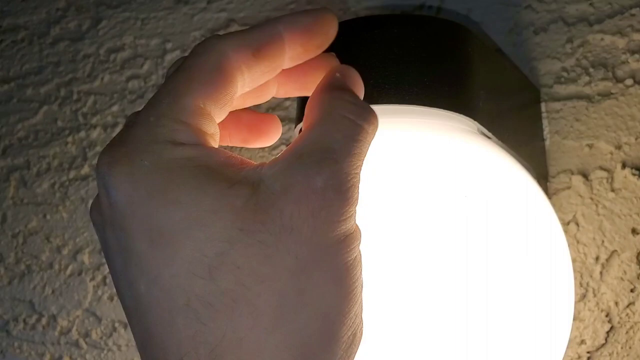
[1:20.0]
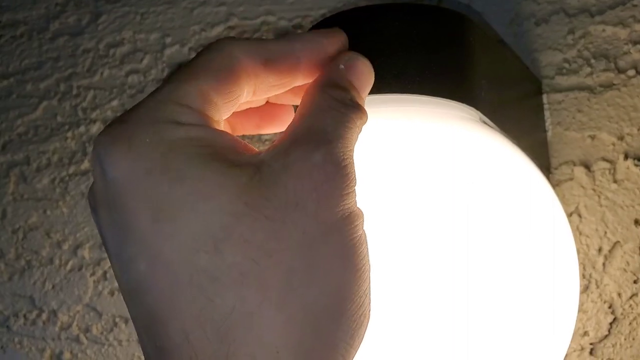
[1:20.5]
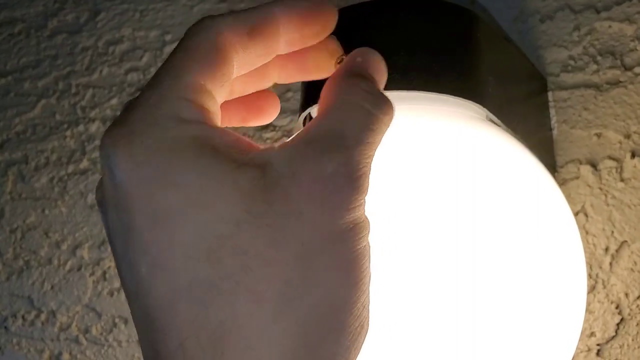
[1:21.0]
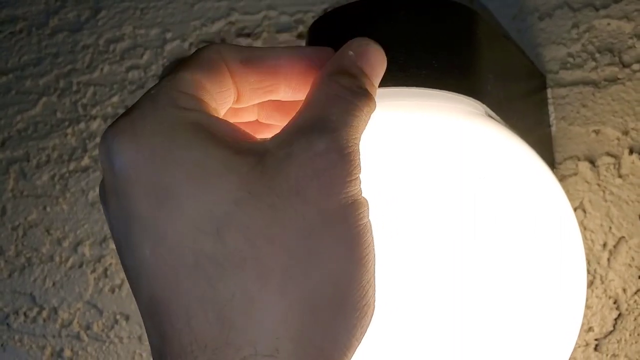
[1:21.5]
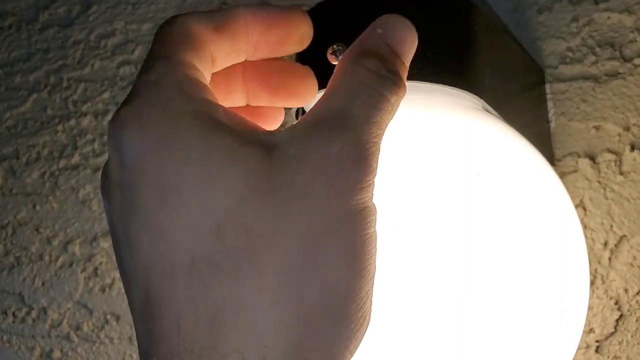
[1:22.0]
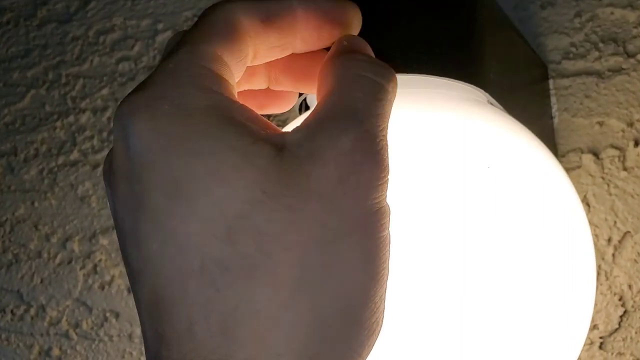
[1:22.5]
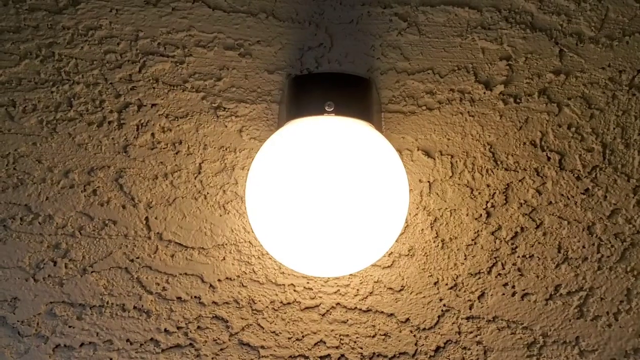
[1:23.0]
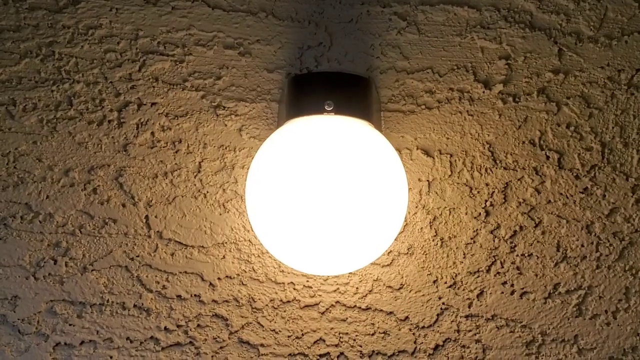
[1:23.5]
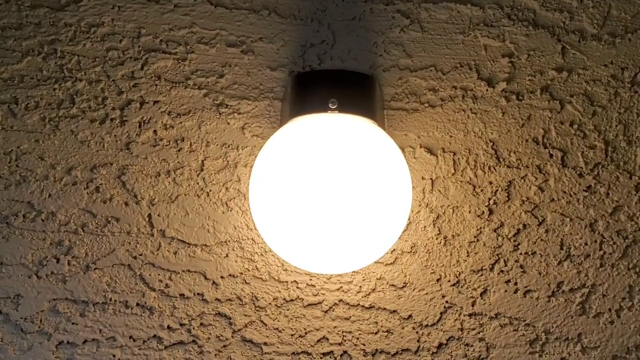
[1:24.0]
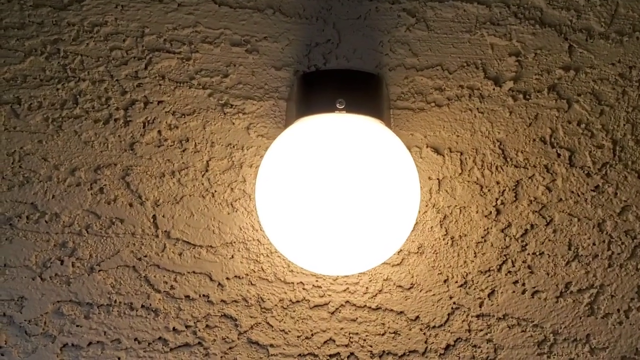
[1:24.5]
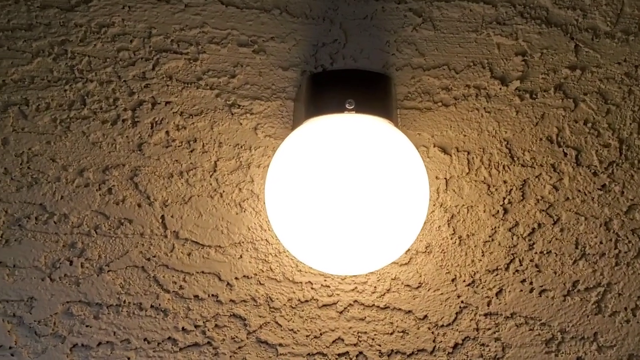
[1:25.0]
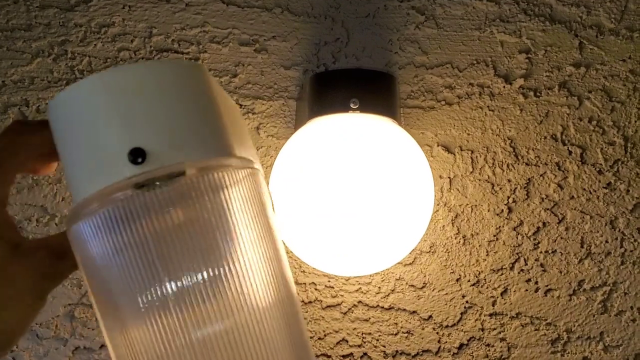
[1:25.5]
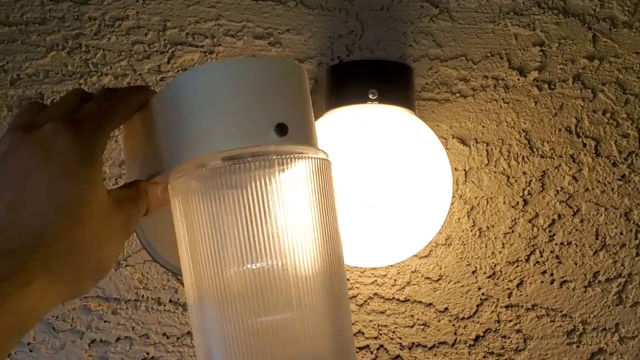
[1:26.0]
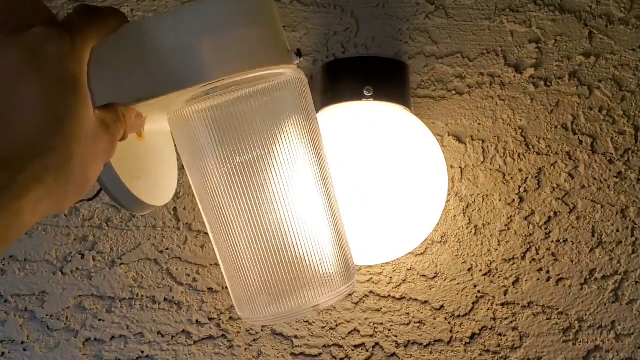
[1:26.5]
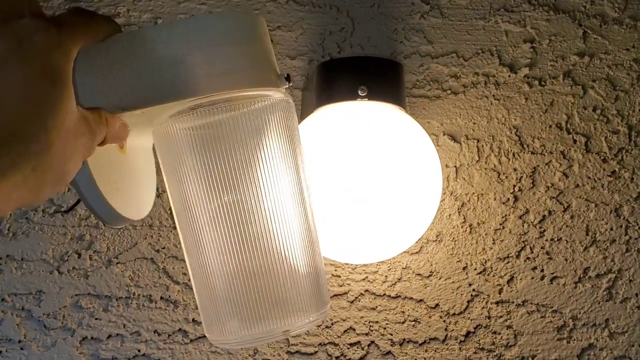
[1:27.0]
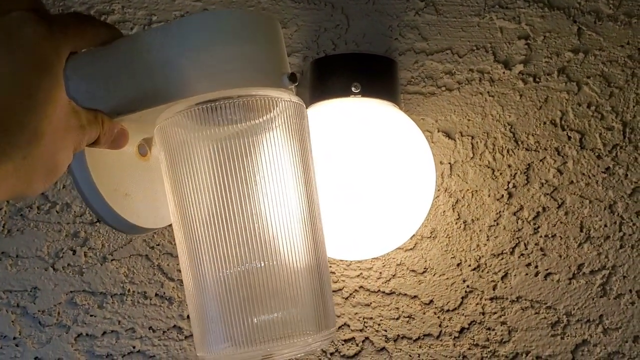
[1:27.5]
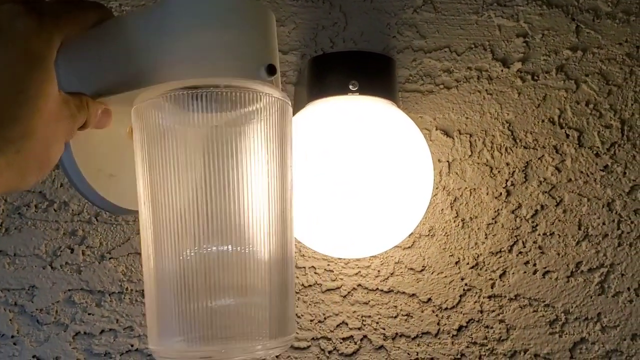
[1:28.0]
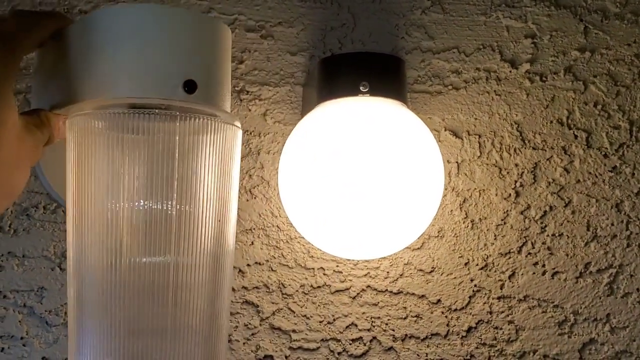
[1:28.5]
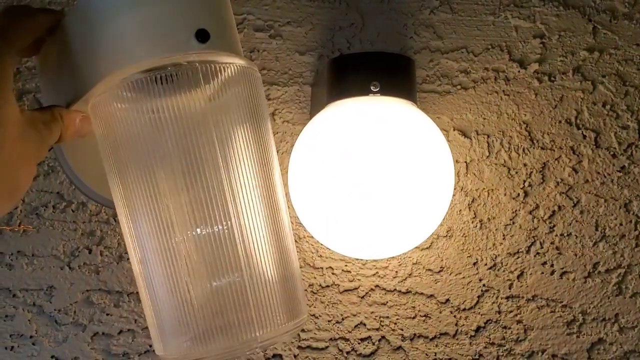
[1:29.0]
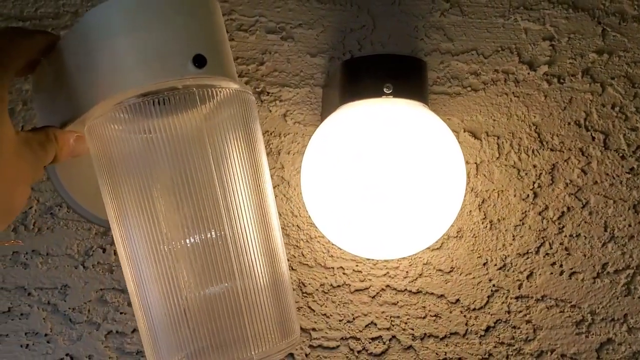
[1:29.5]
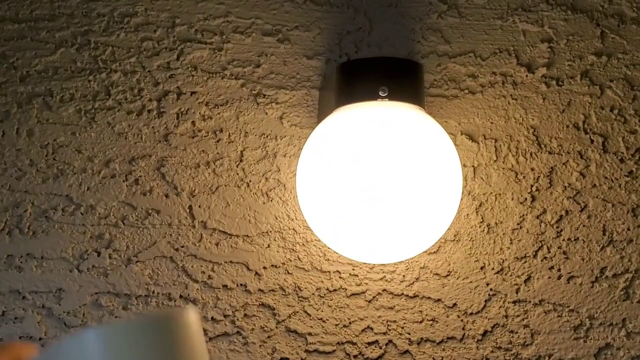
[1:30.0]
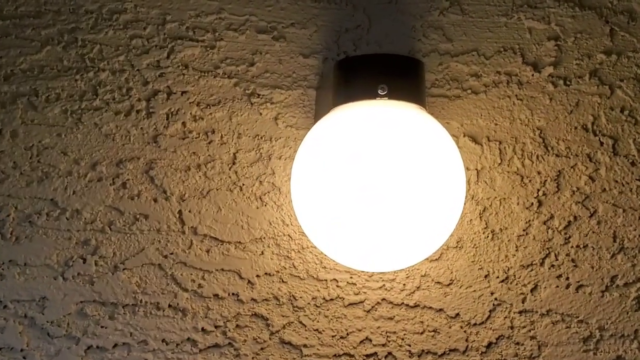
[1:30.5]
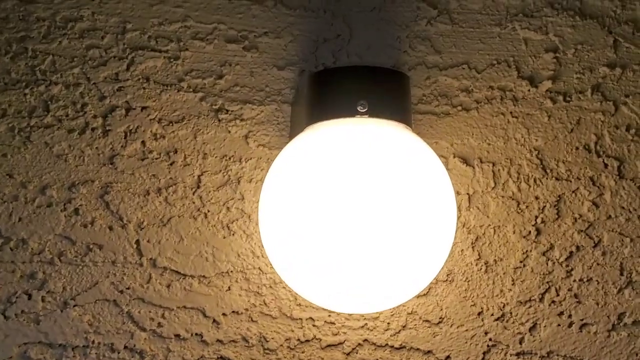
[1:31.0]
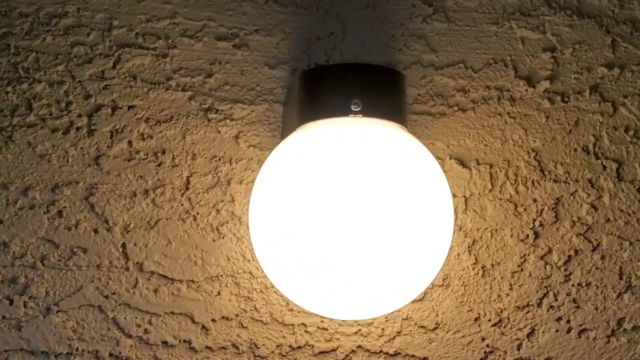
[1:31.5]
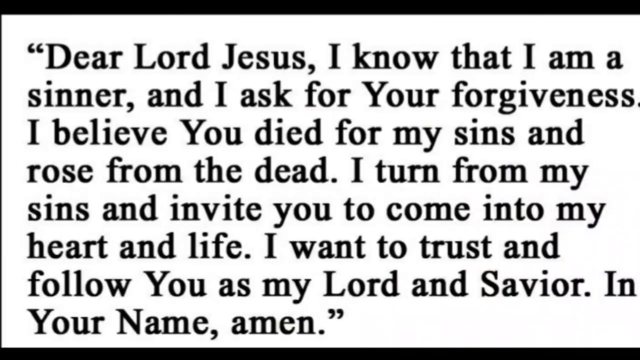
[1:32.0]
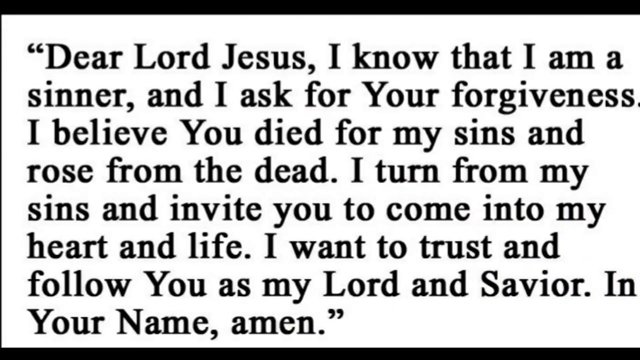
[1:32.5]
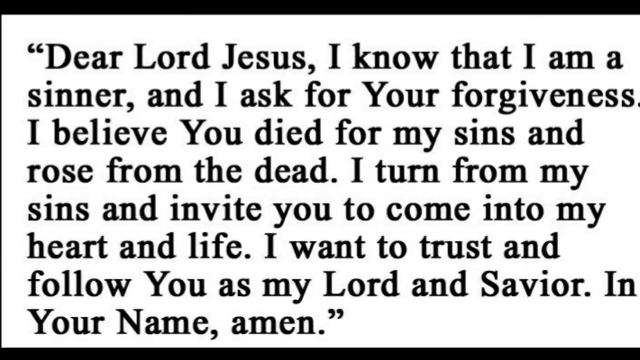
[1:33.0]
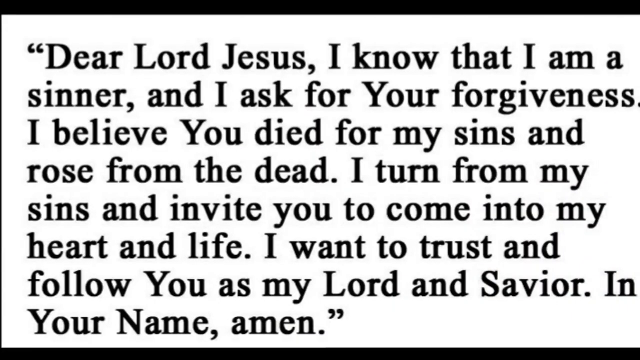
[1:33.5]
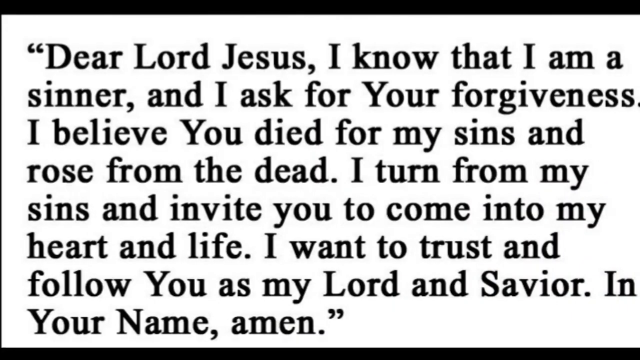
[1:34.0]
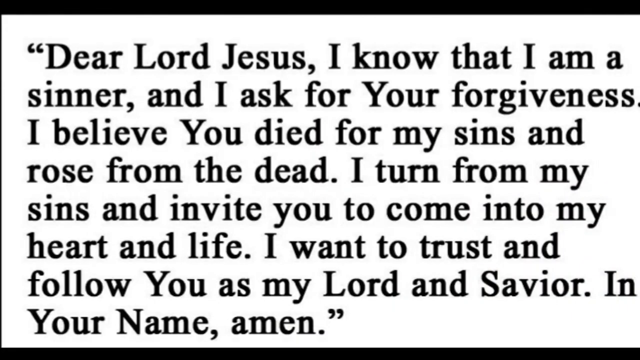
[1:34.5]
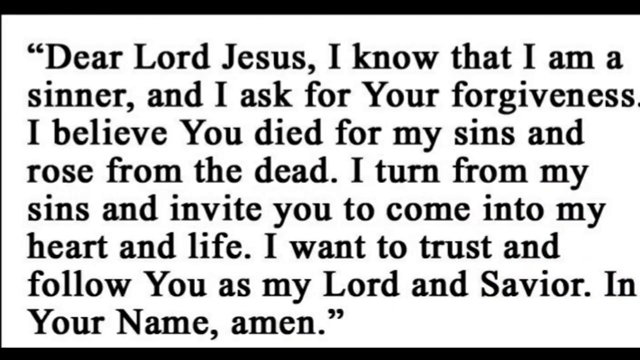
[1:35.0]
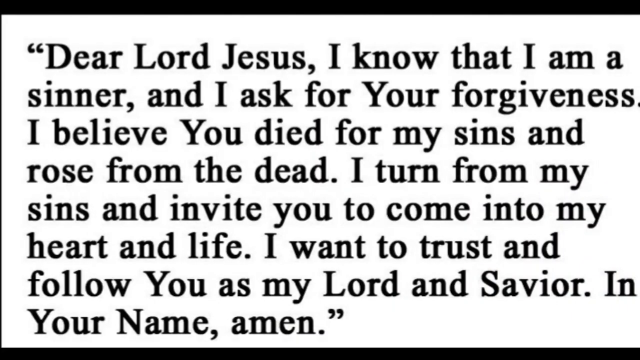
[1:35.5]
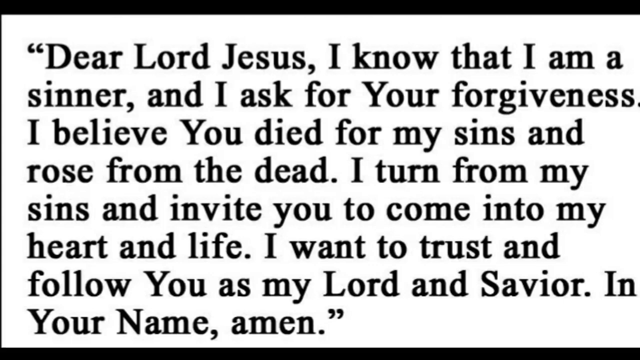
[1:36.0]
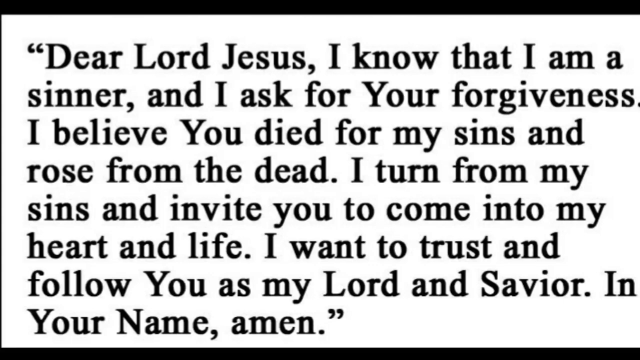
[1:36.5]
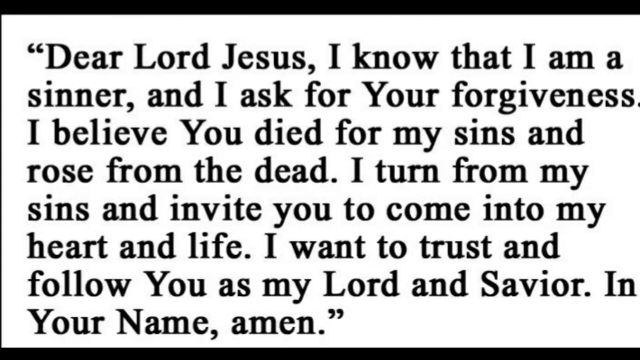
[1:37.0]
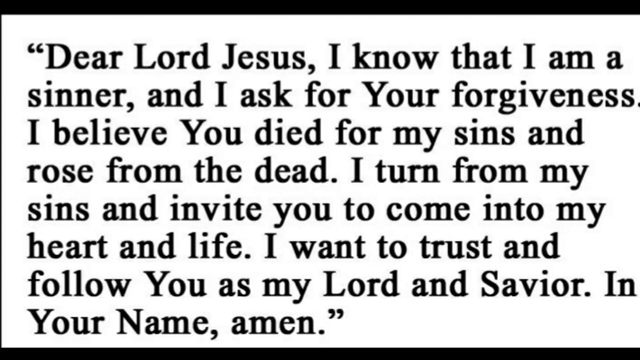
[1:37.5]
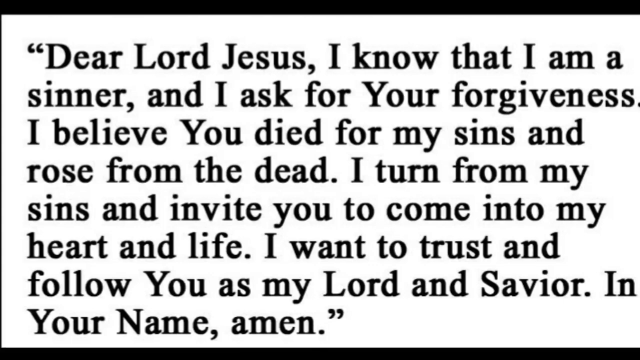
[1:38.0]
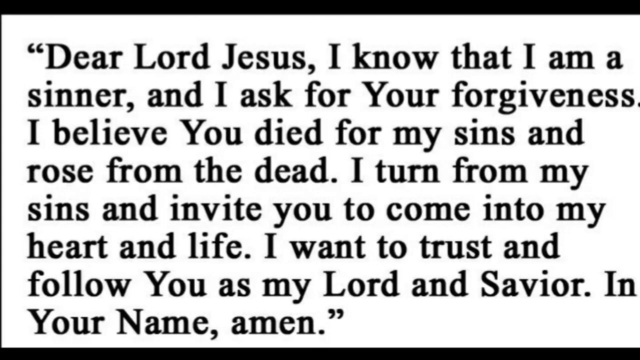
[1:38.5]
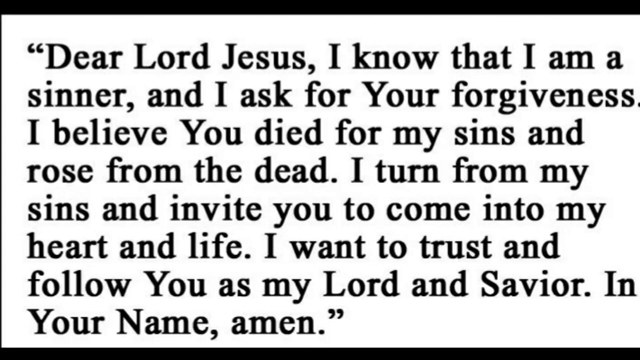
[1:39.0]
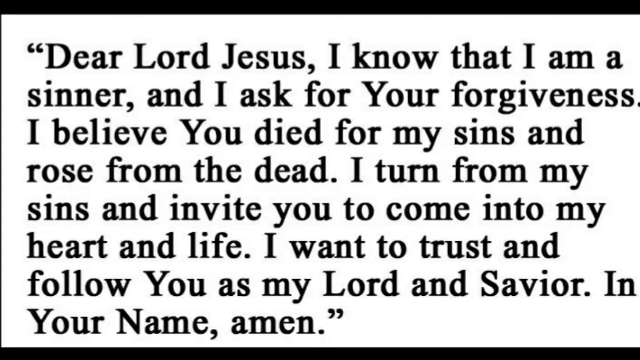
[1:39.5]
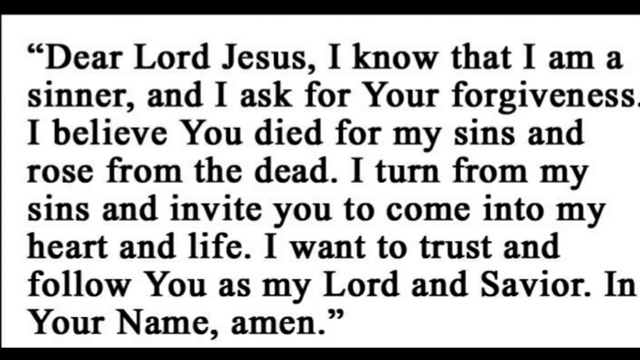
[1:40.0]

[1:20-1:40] The man puts in a screw by hand; the screw uses a case that holds the bulb. At the end, a verse appears that reads "Dear god dear lord Jesus I know that I am a sinner and I ask for forgiveness I believe you died for my sins and rose from the dead I turn from my sins and invite you to come into my heart and life I want to trust you and follow you as my lord and savior in your name amen".